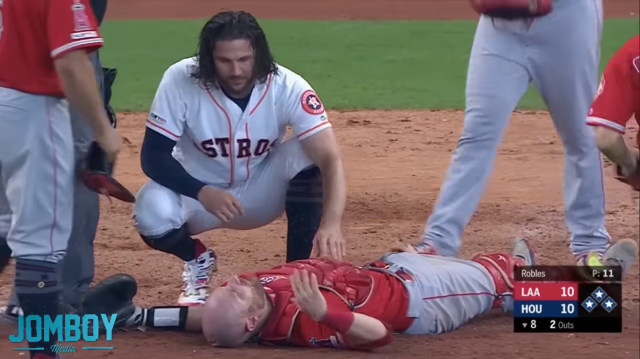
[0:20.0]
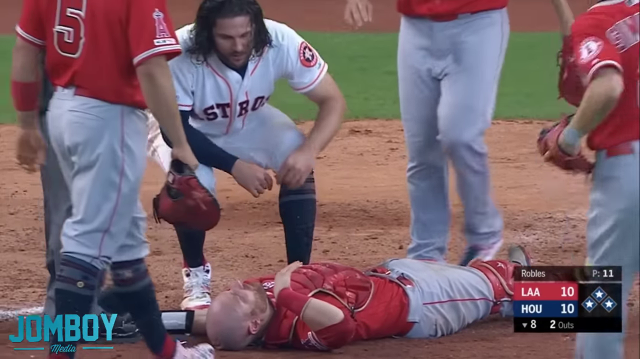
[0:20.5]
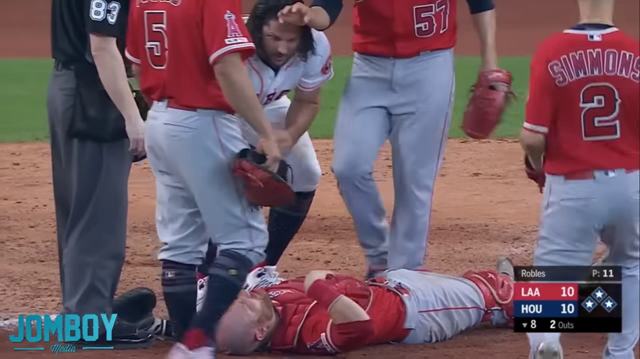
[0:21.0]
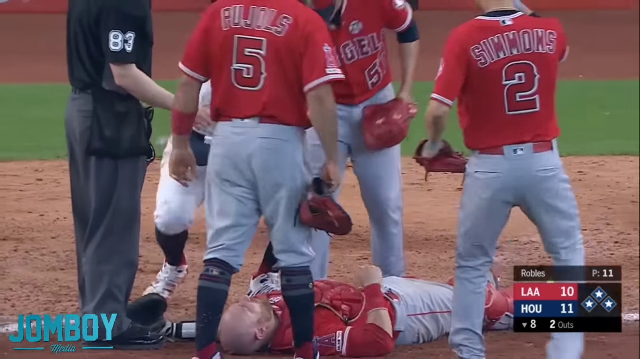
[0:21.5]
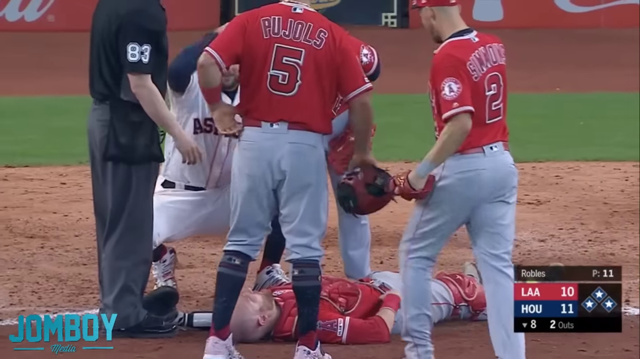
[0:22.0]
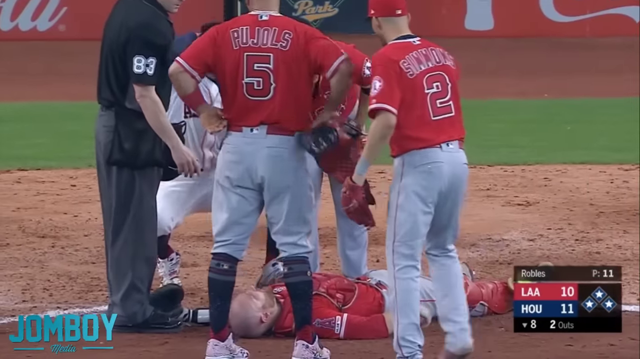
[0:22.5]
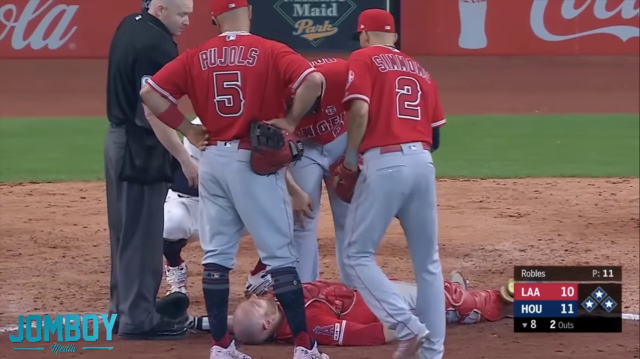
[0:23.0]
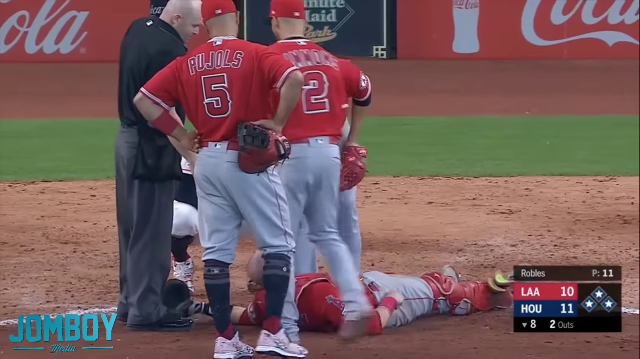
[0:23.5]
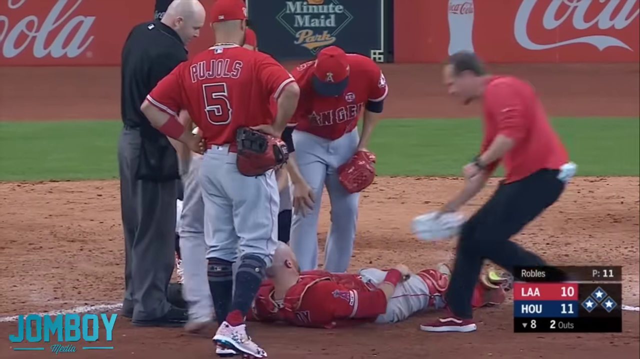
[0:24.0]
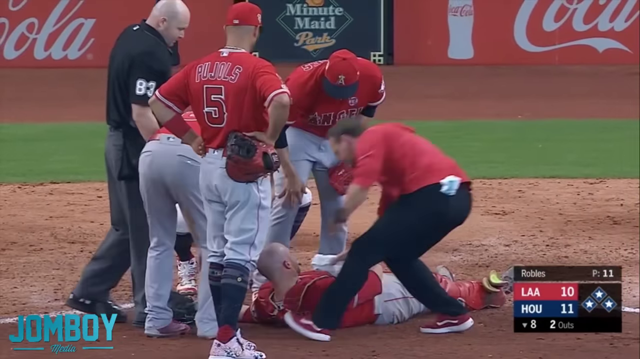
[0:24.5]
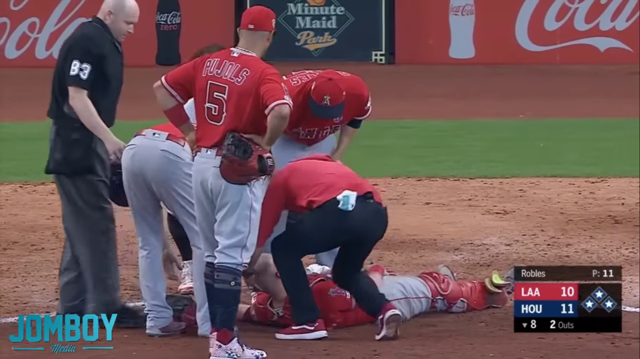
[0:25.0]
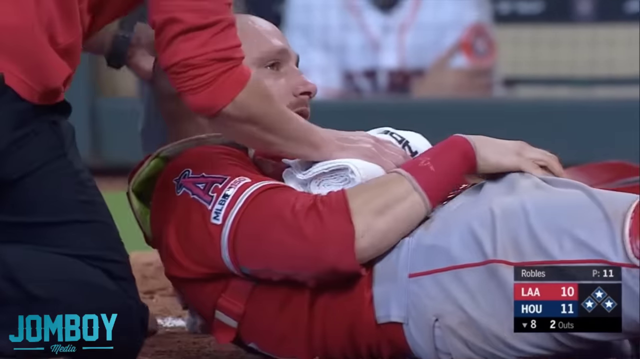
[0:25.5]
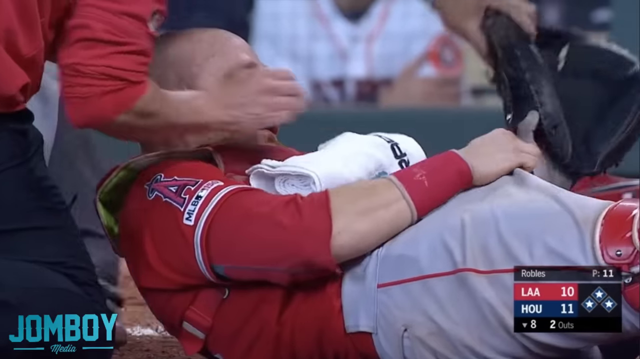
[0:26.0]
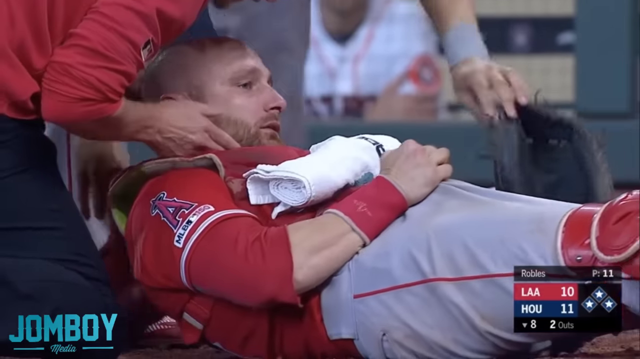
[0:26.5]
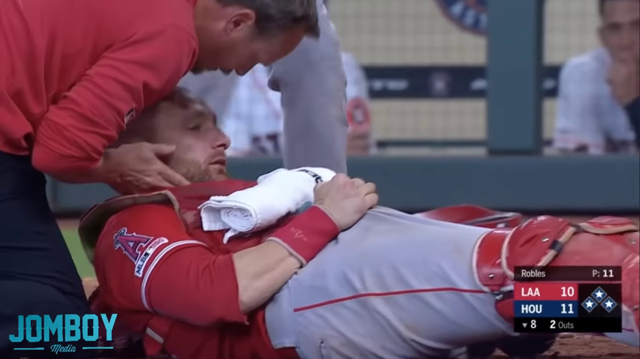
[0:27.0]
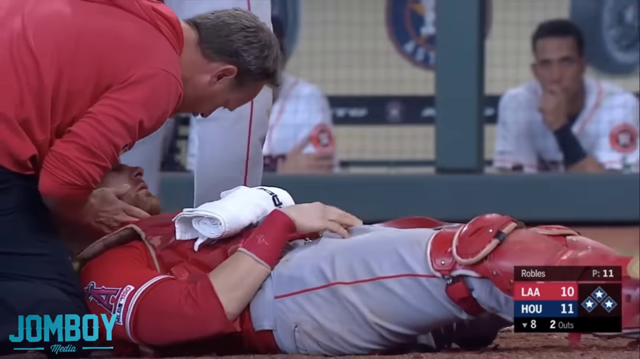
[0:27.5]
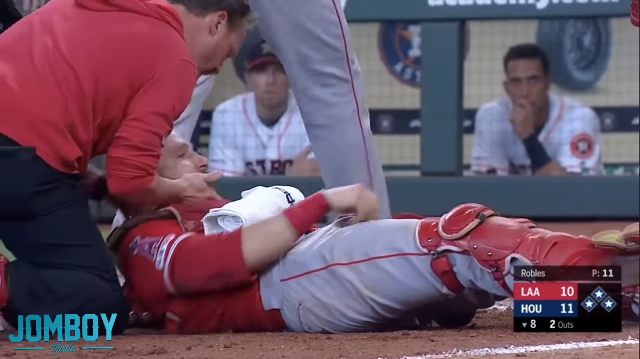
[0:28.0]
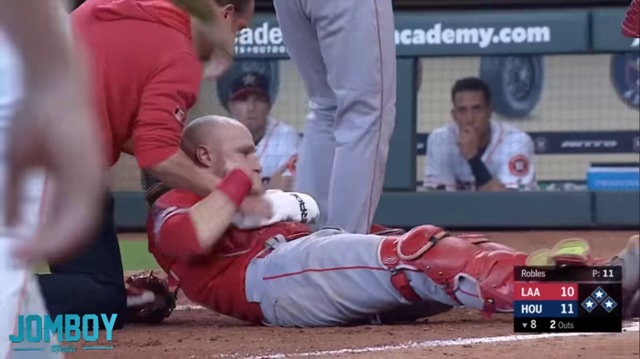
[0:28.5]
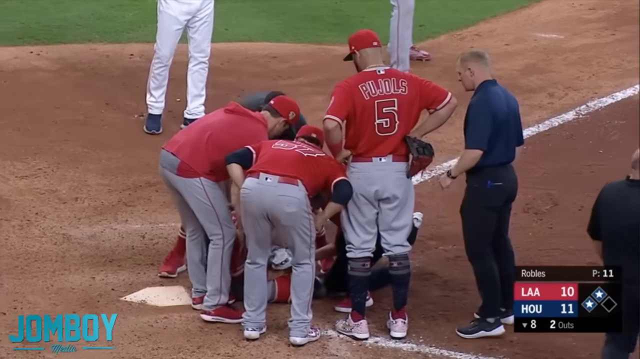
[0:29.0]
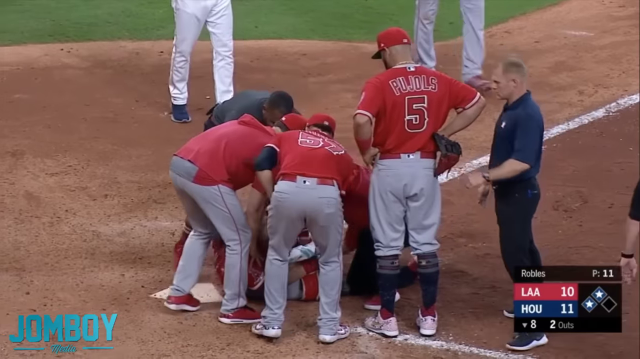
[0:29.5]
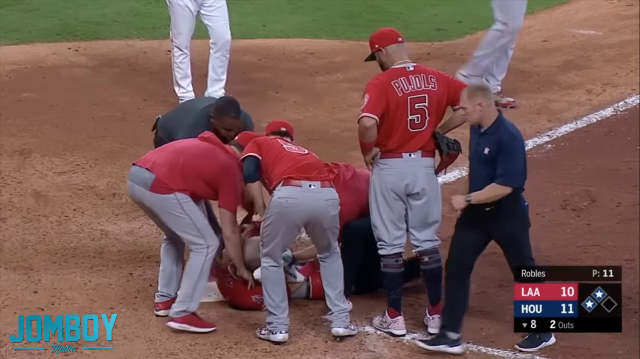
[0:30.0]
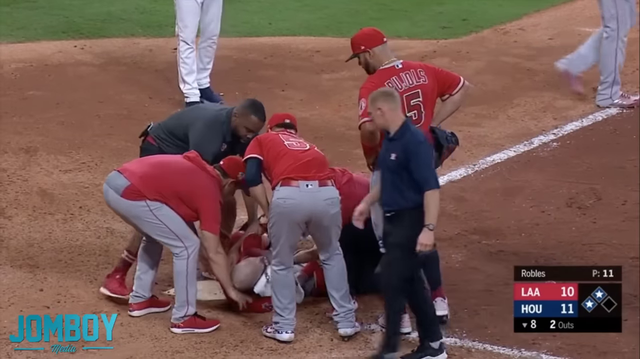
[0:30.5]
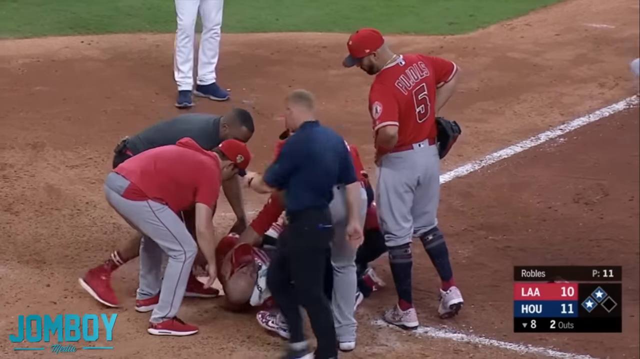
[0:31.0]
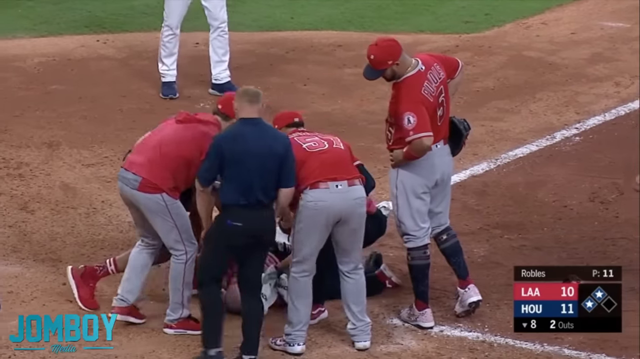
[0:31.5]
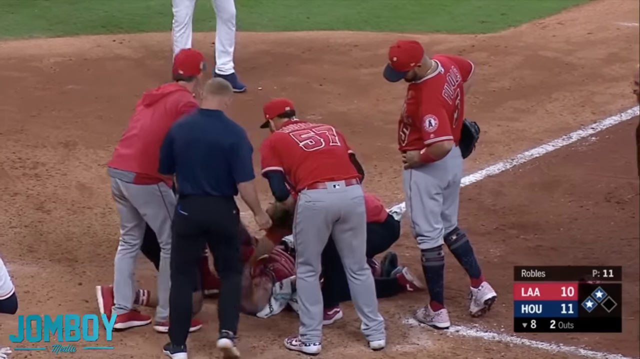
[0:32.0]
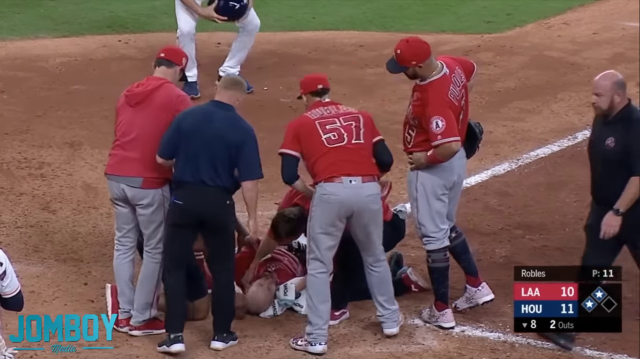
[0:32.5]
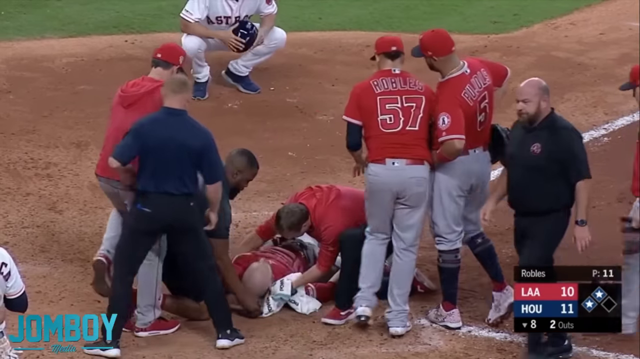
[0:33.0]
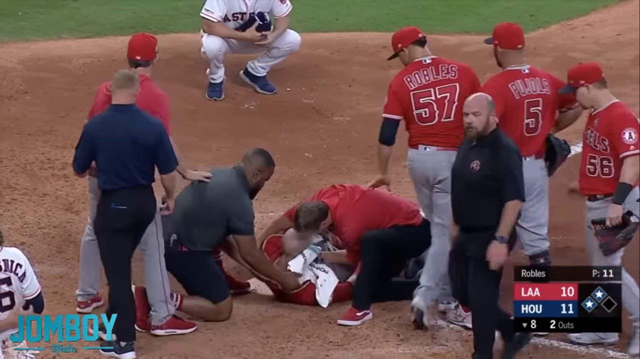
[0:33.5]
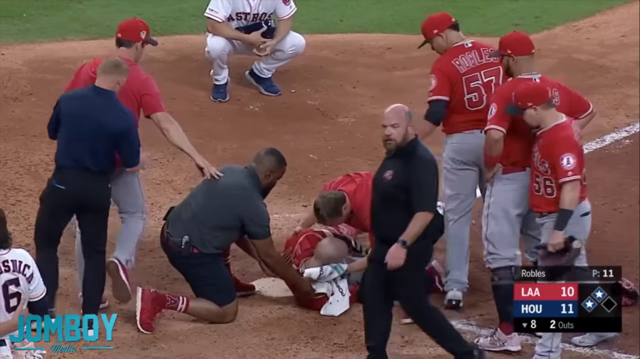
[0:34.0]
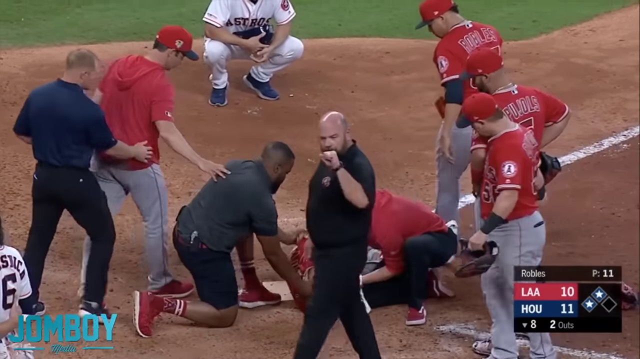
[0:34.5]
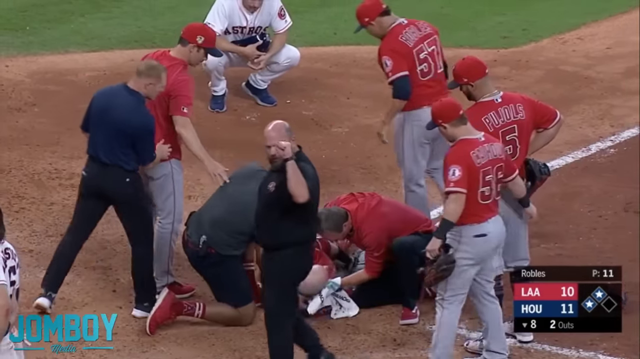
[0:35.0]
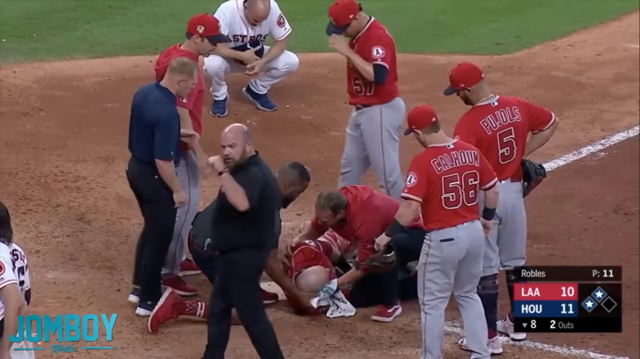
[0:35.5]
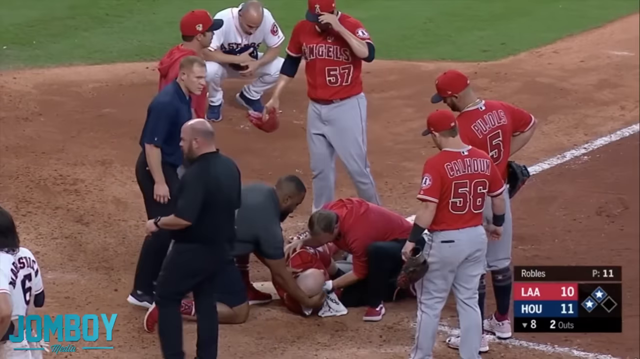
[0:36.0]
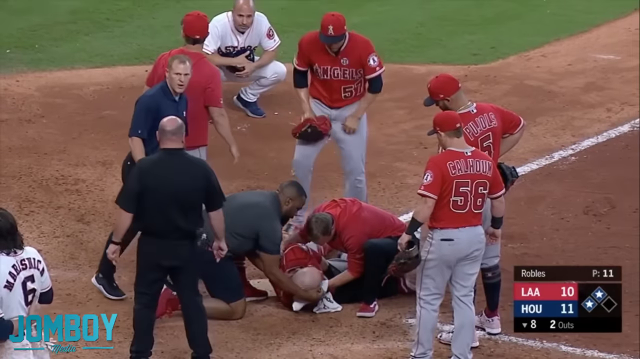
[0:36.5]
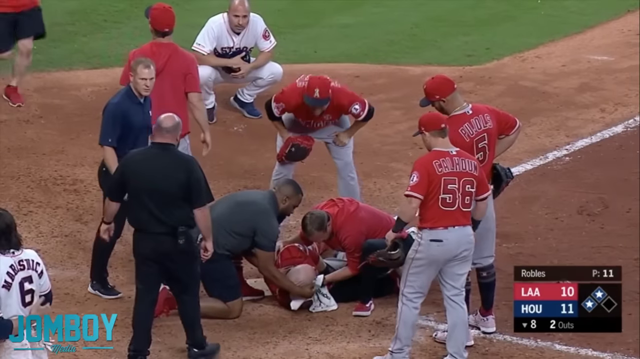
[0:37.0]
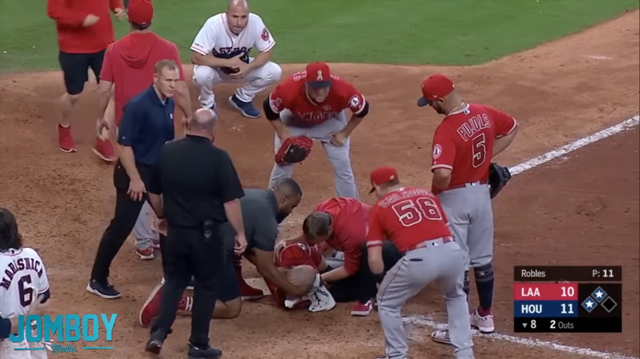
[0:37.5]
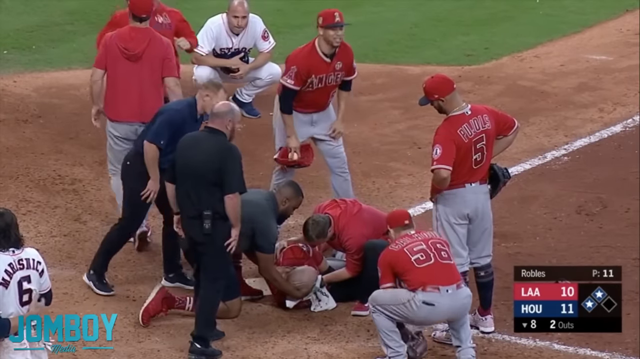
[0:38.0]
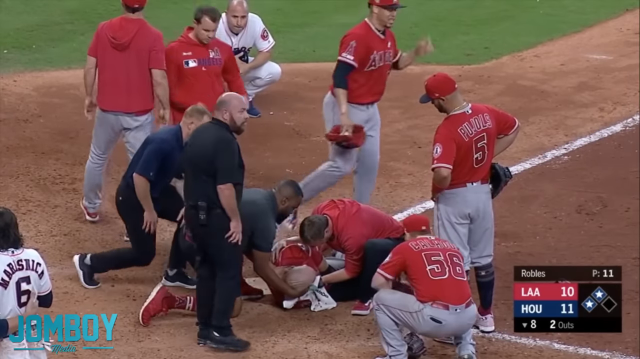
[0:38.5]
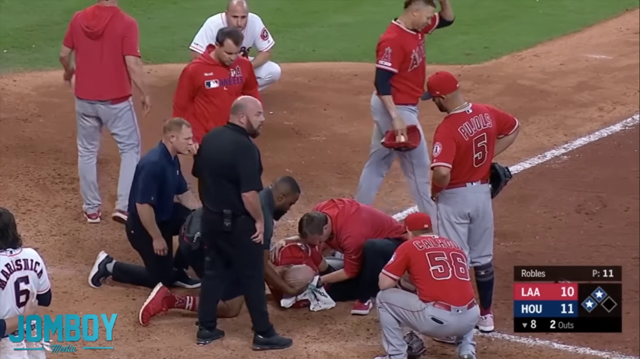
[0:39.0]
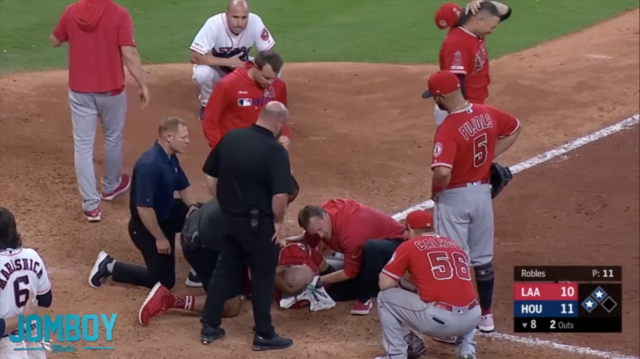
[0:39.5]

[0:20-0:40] More people check on the fallen player, including the player who bumped into him. A teammate checking on him wears number 5 with the last name "P-U-J-L-L-S". Another player wears number 2, but he moves quickly and only the letter "S" of his last name is visible. Another jersey reads "57" and "R-O-B-L-E-S". Medical people on the field check him and help him roll over, and some of his teammates are around him. The game appears to be paused. The injured player does not look fine and is not moving.